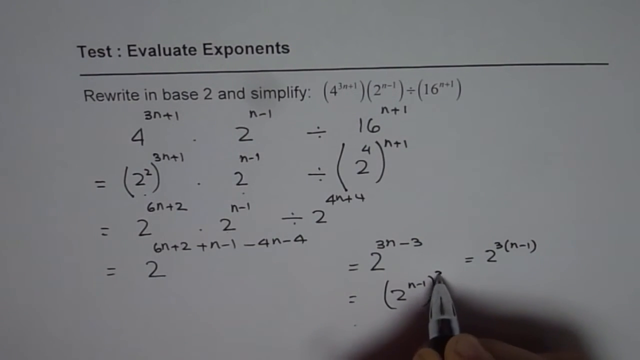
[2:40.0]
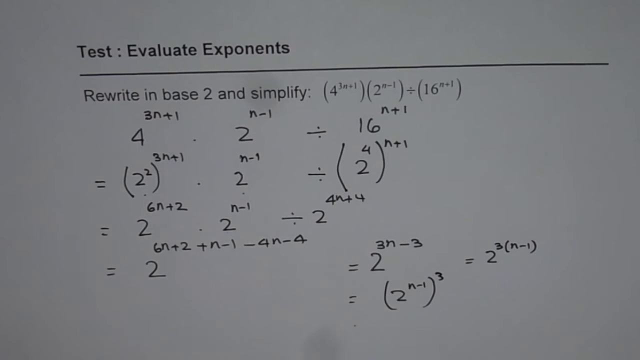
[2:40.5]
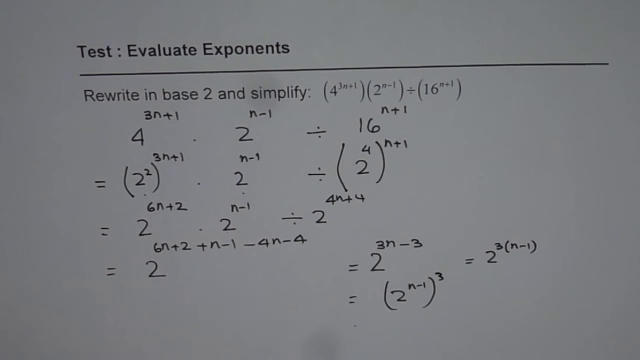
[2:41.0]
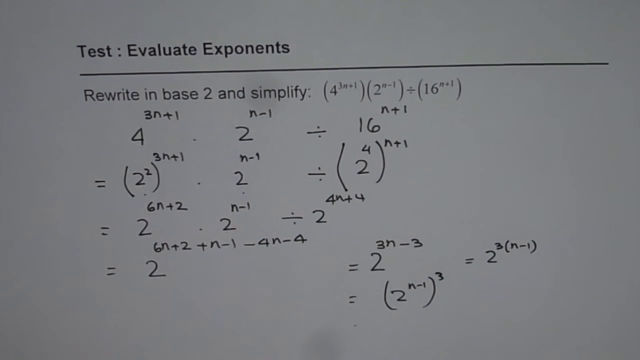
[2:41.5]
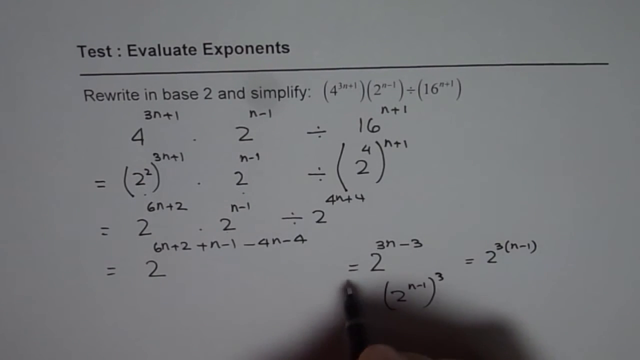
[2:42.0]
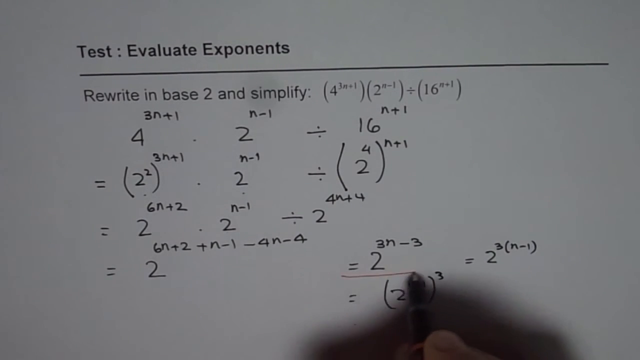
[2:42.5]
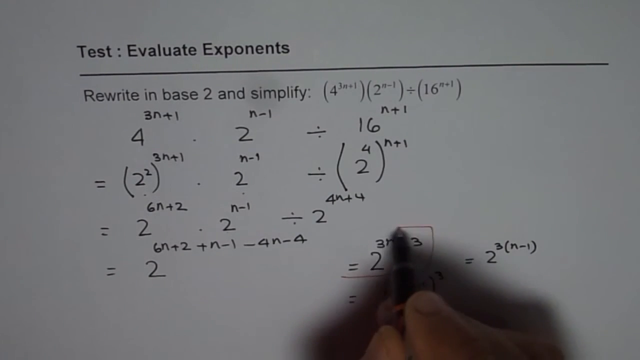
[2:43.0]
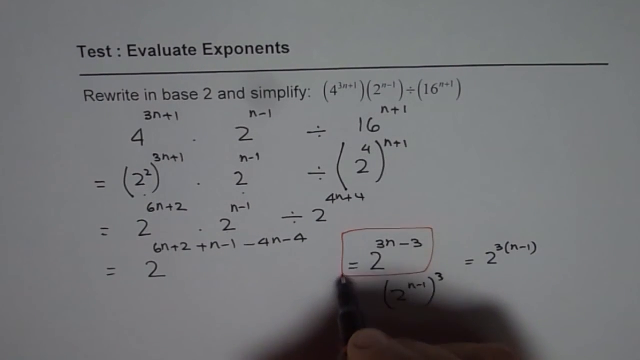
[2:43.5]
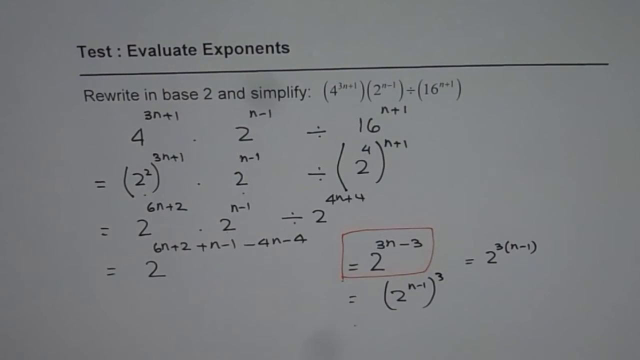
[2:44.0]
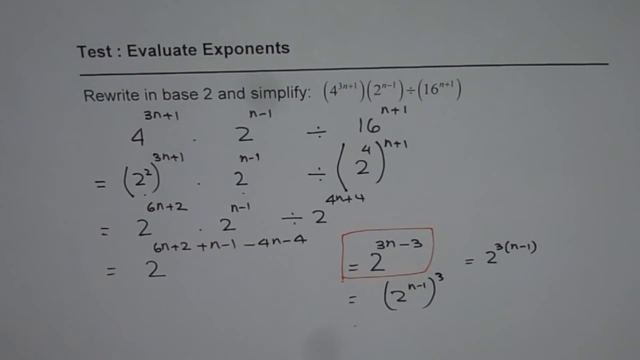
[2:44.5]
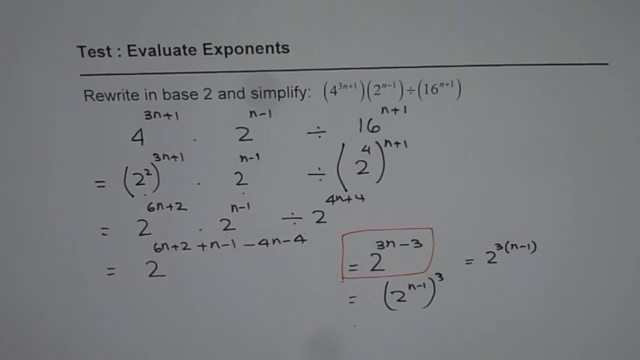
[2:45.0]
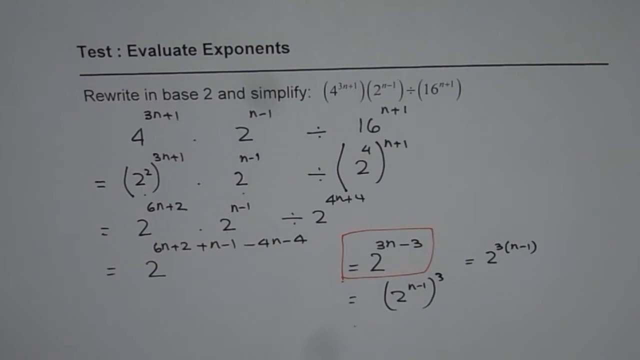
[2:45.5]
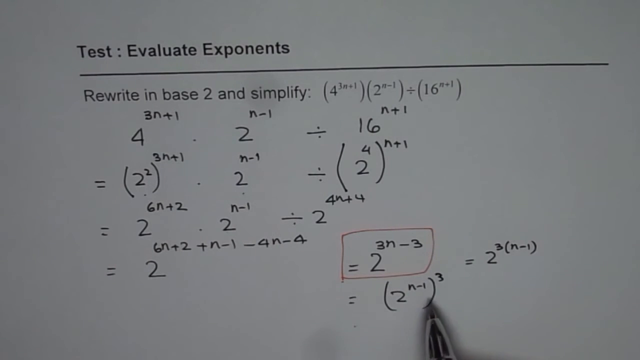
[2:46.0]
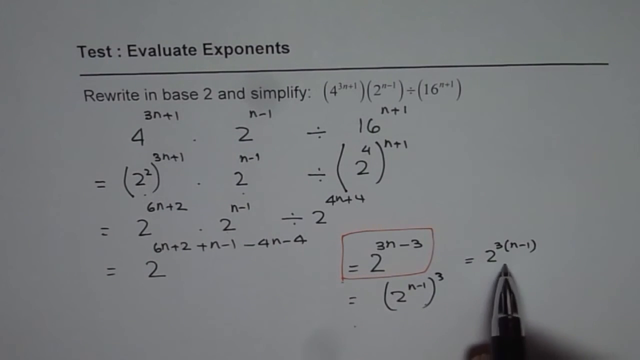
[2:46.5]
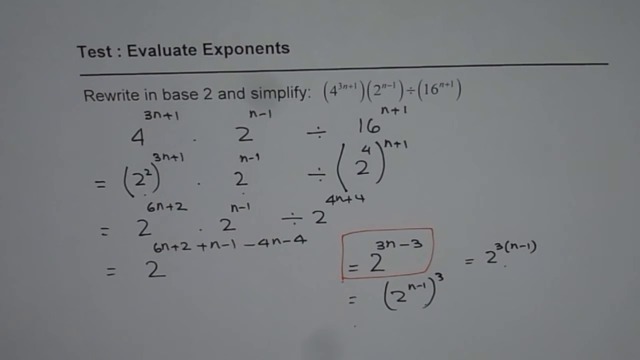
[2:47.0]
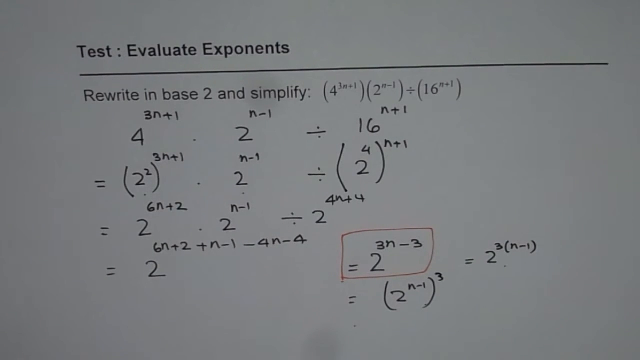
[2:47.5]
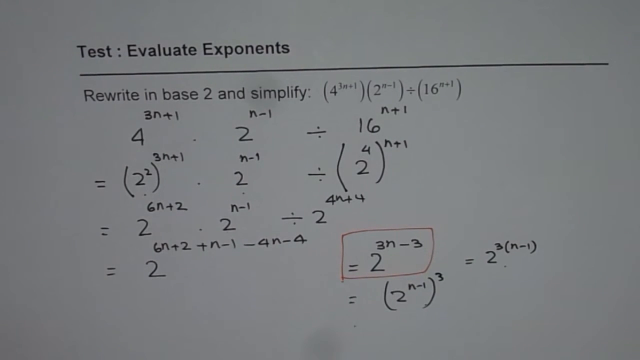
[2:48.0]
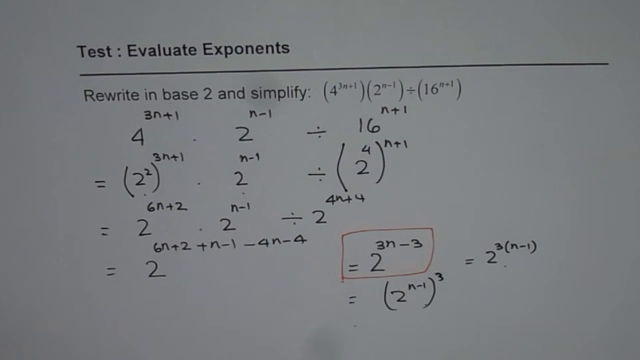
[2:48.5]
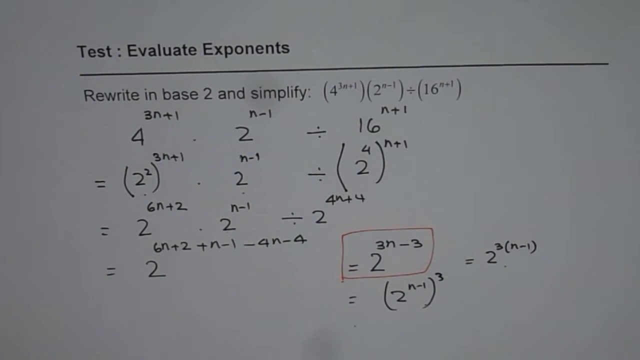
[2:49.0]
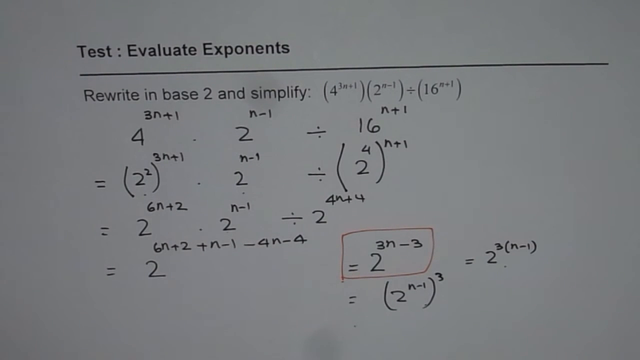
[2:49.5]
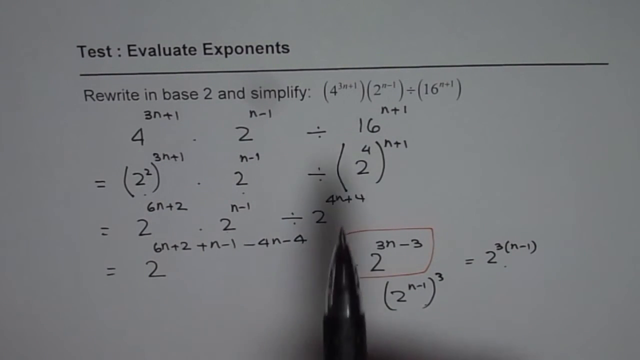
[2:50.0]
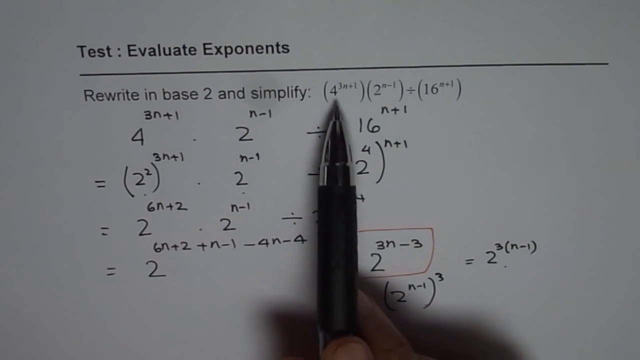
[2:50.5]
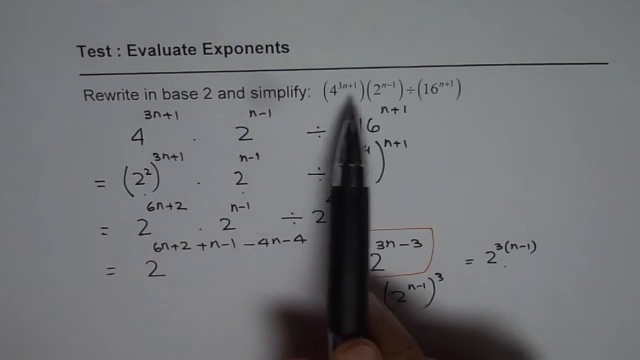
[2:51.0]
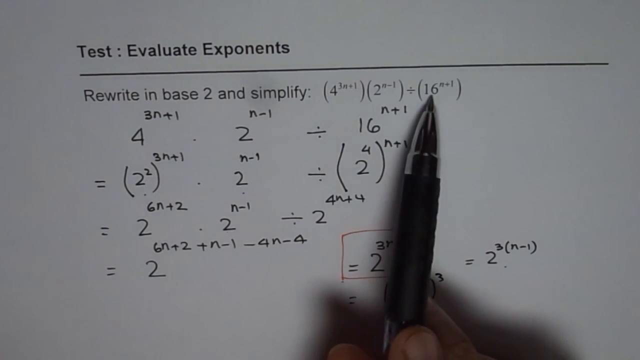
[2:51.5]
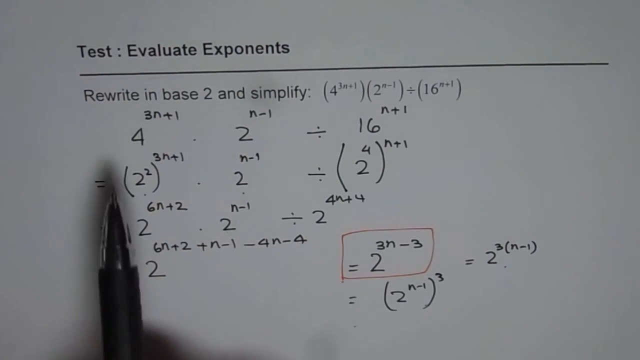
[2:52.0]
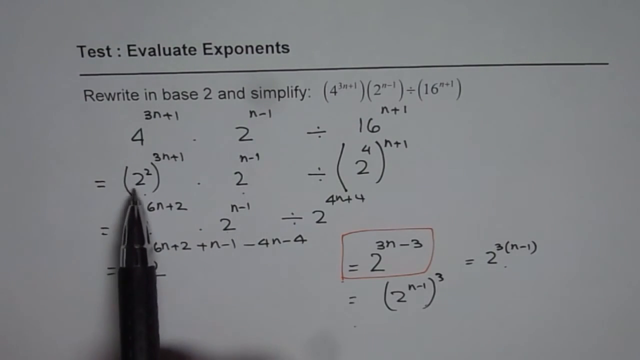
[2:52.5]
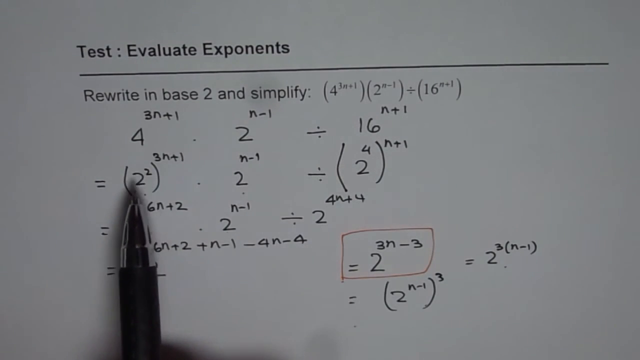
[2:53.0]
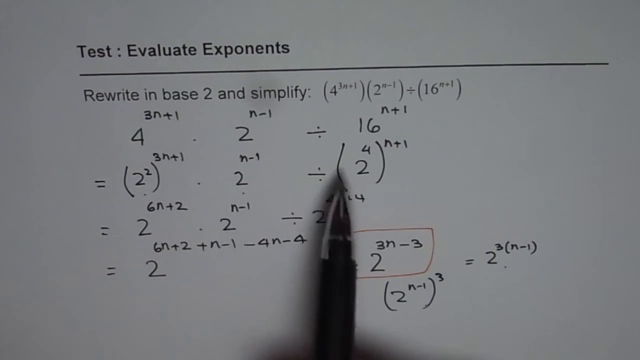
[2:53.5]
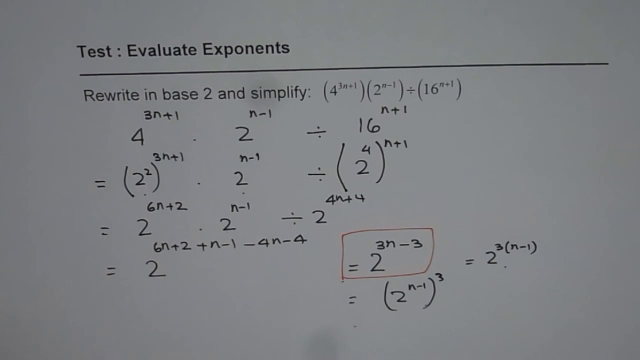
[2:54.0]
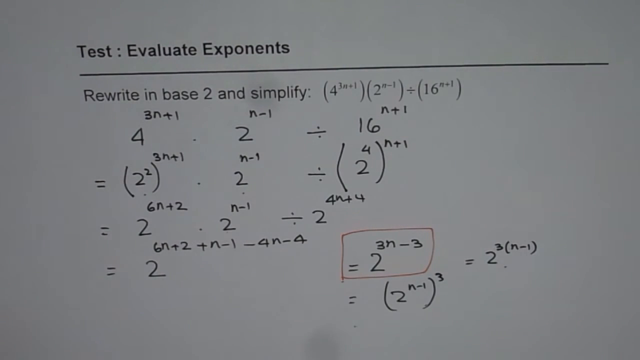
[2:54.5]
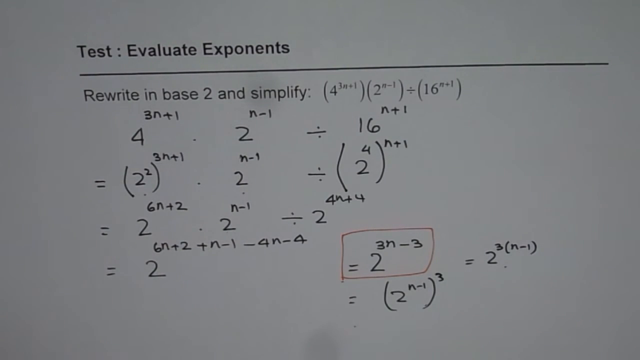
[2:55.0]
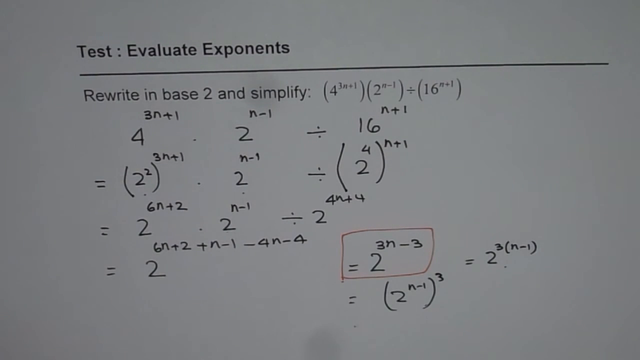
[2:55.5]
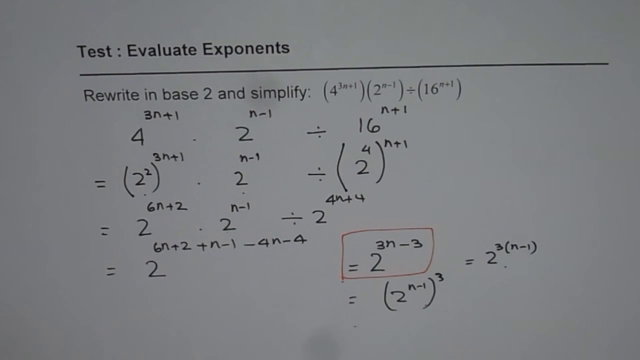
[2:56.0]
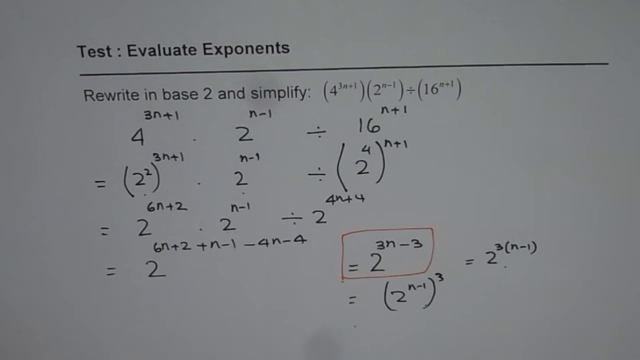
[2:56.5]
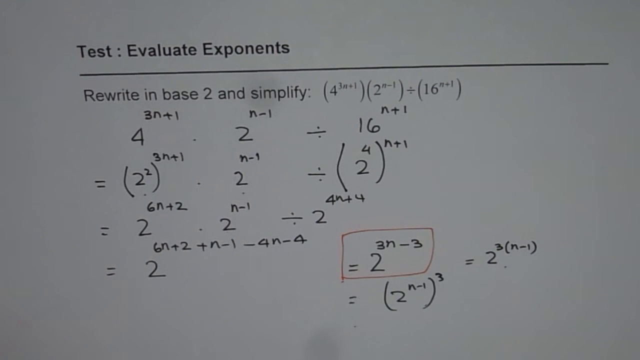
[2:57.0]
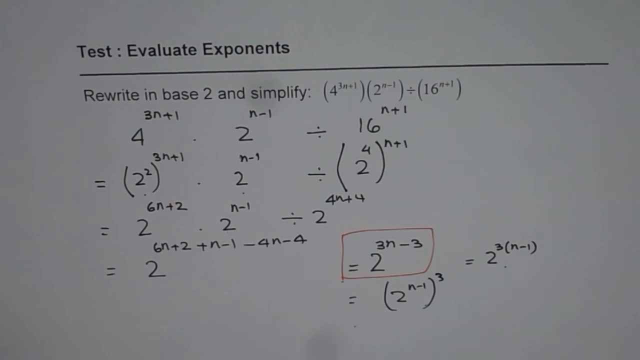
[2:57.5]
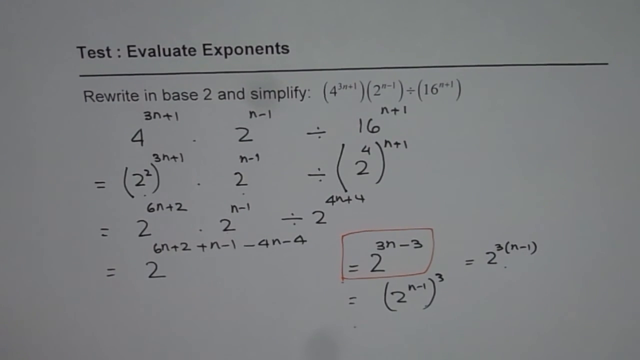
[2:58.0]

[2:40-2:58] A white piece of paper has bold black text at the top reading "test evaluate exponents," with a black line across the paper and, underneath, "rewrite in base two and simplify," with a formula to the right. The person has written five lines simplifying the formula. At the bottom of the screen, the person's right hand holds a black pen with a silver tip, and they seem to be highlighting part of the fourth line. The pen then changes to one with a black tip but red ink, and they draw a box around the part of the formula that says "= 2" with the exponent 3n − 3. They go back to the black pen with the silver tip, point at the formula at the top of the page, then point at the second line they wrote, and the pen disappears.